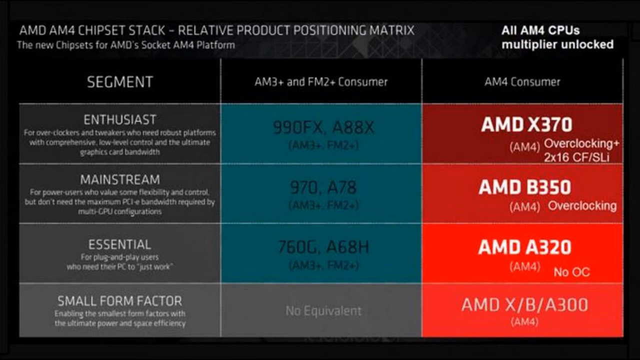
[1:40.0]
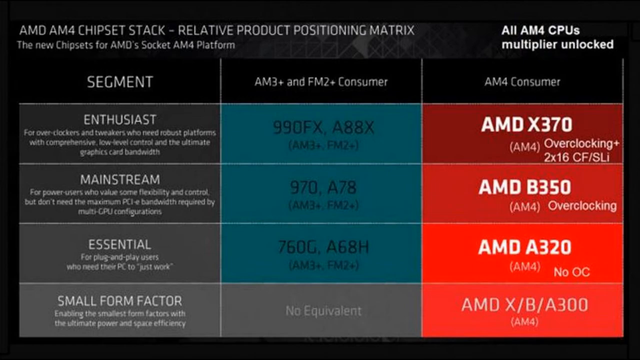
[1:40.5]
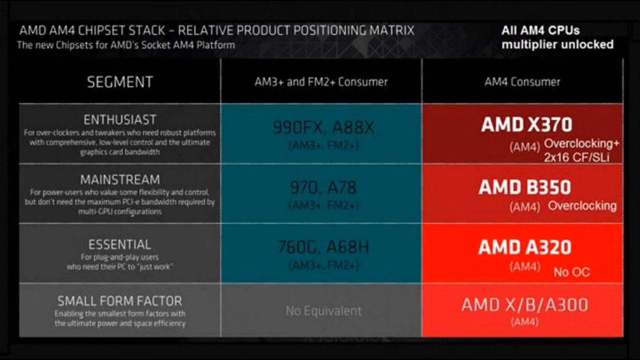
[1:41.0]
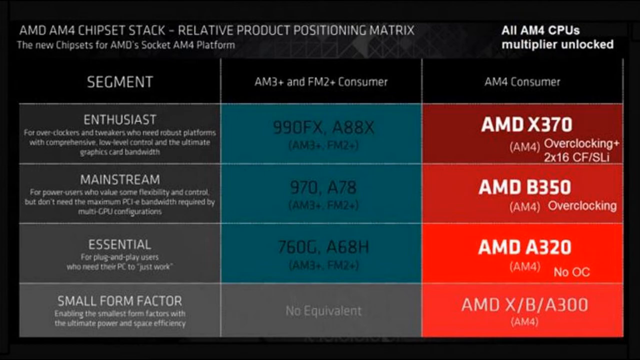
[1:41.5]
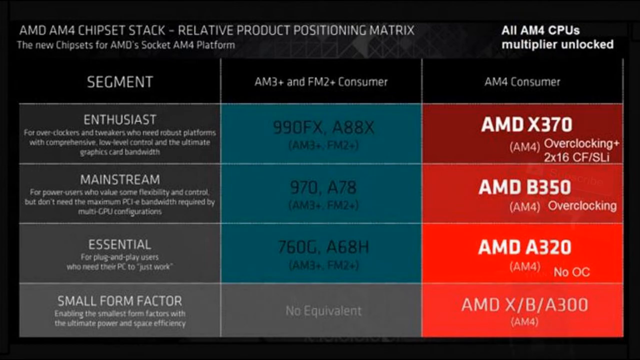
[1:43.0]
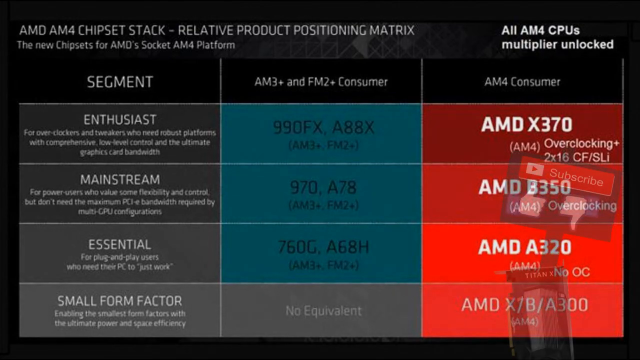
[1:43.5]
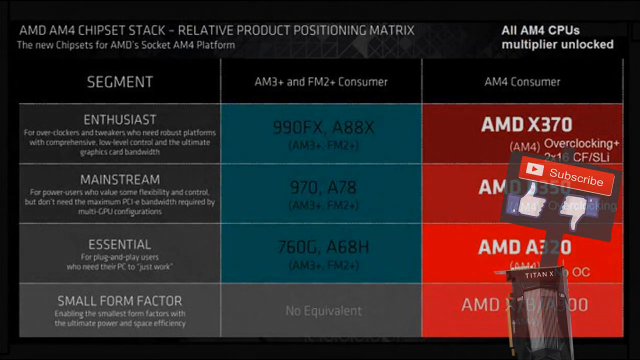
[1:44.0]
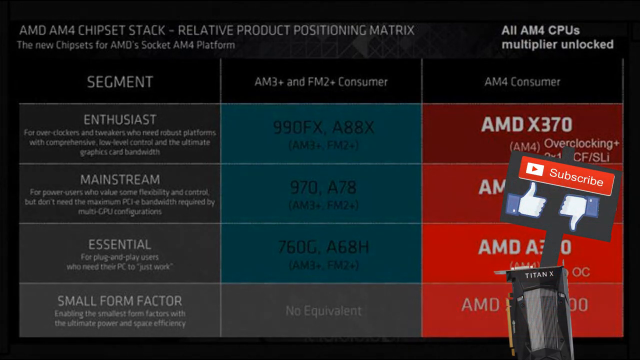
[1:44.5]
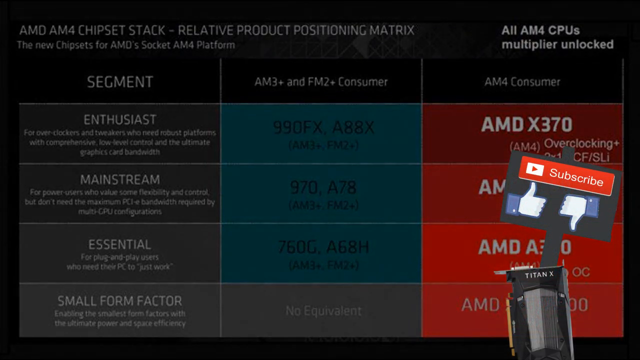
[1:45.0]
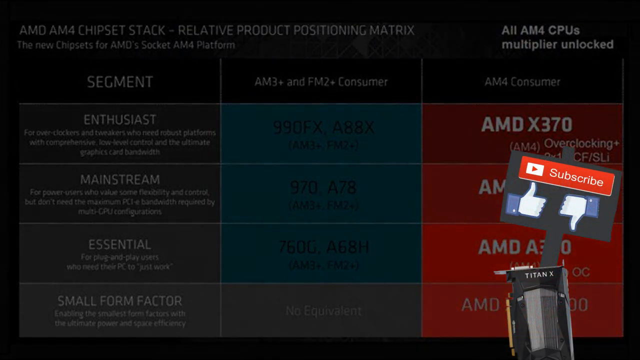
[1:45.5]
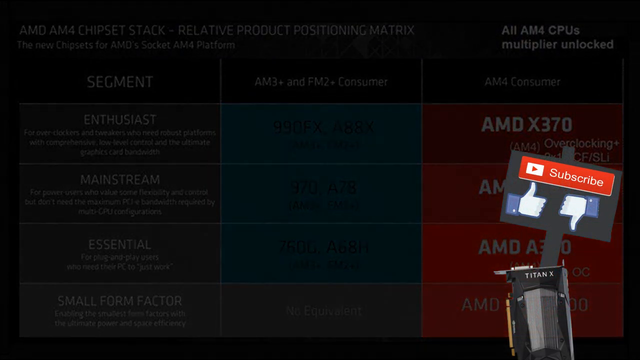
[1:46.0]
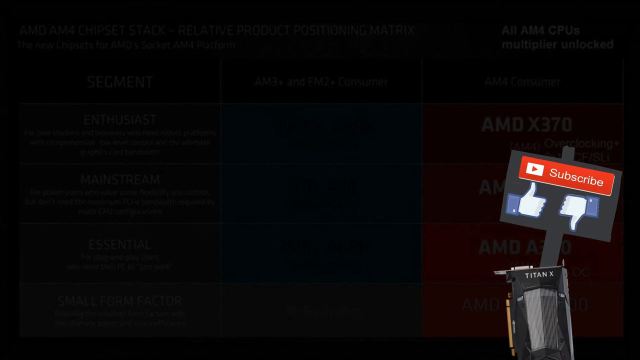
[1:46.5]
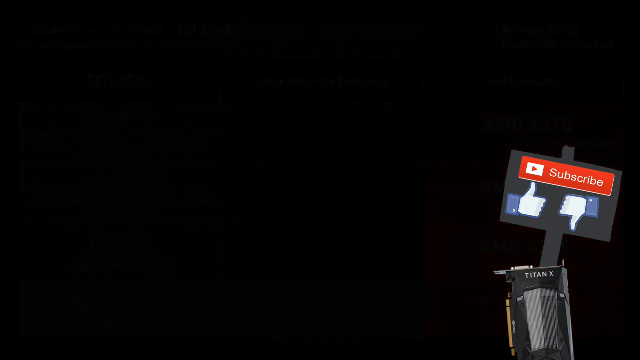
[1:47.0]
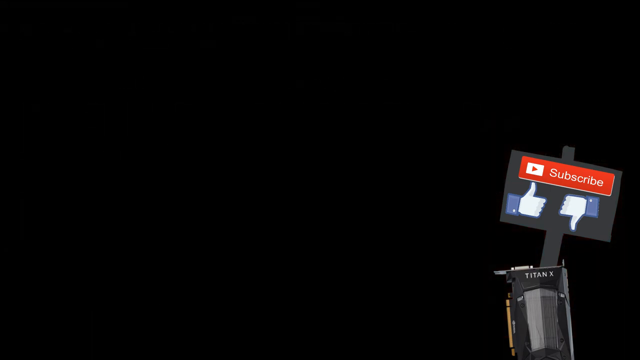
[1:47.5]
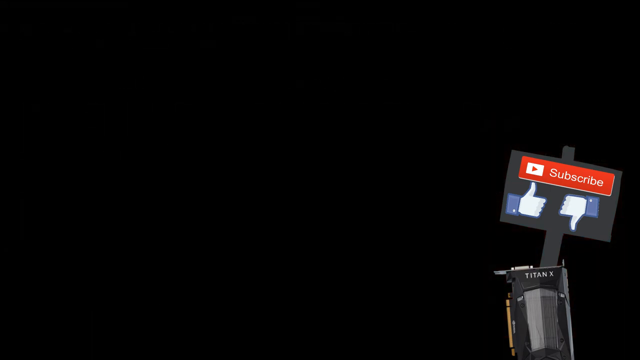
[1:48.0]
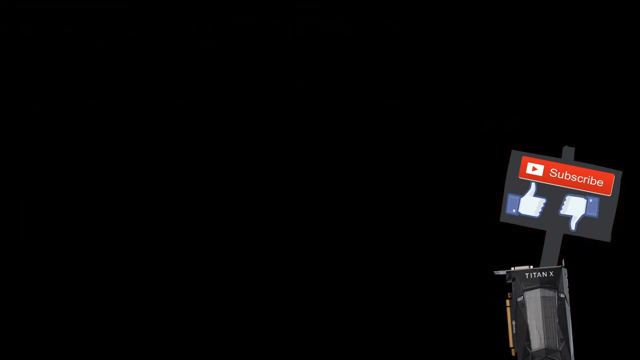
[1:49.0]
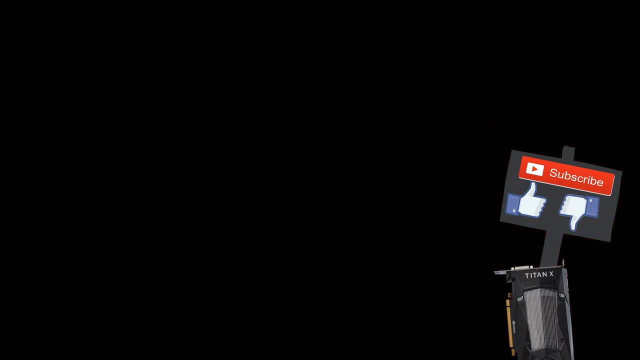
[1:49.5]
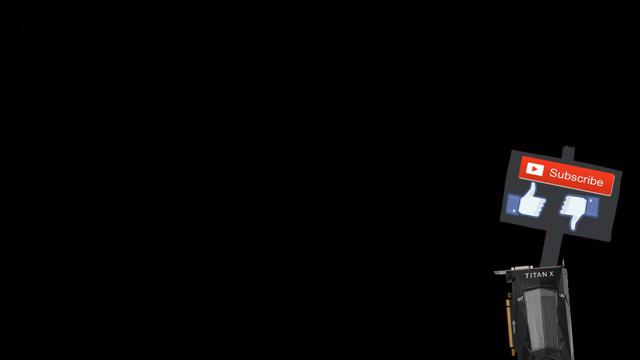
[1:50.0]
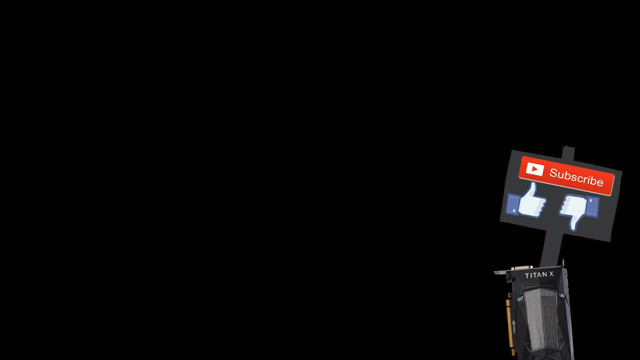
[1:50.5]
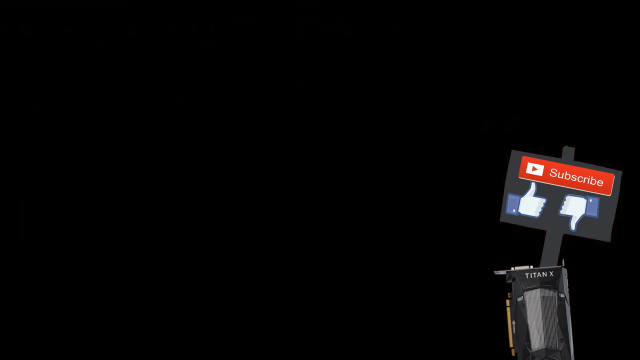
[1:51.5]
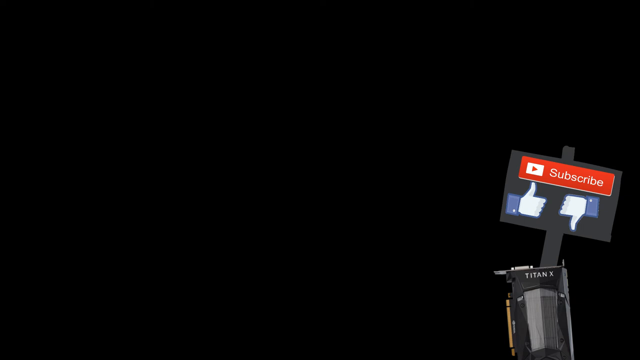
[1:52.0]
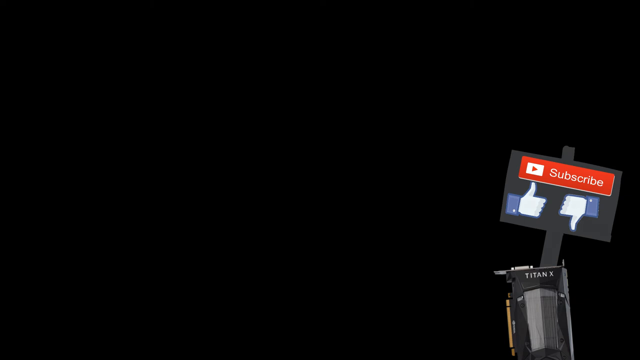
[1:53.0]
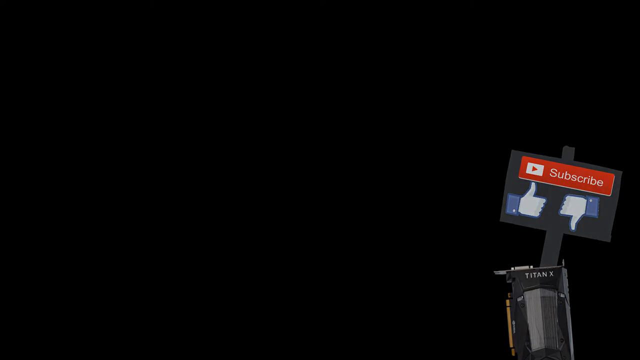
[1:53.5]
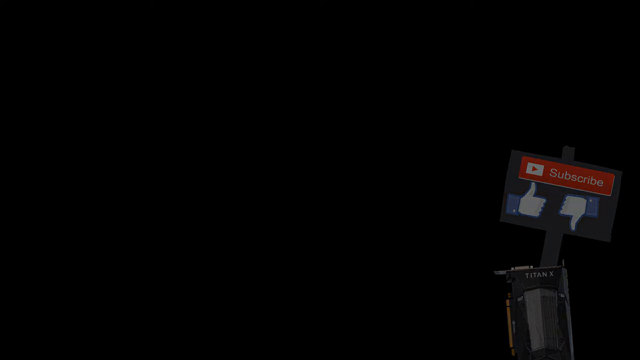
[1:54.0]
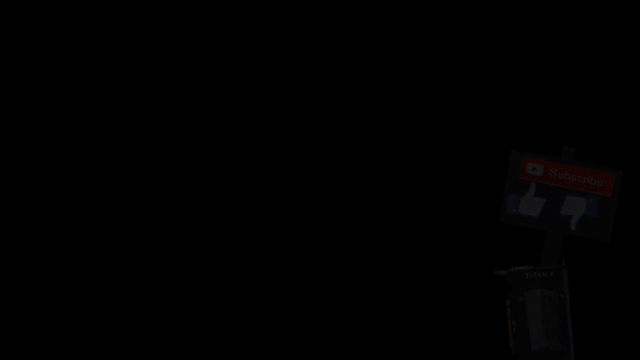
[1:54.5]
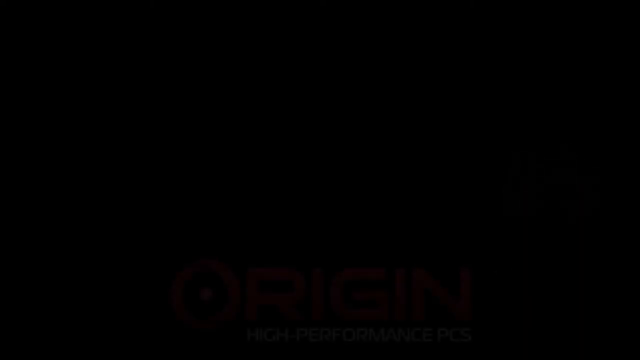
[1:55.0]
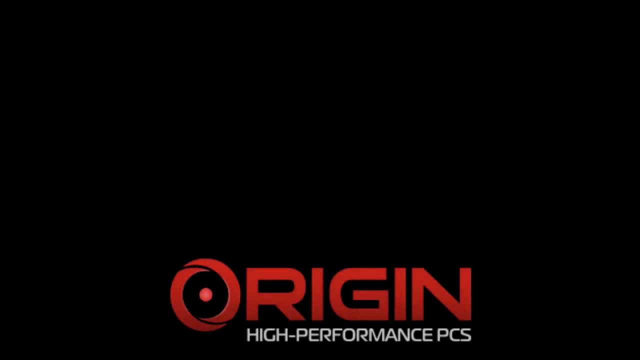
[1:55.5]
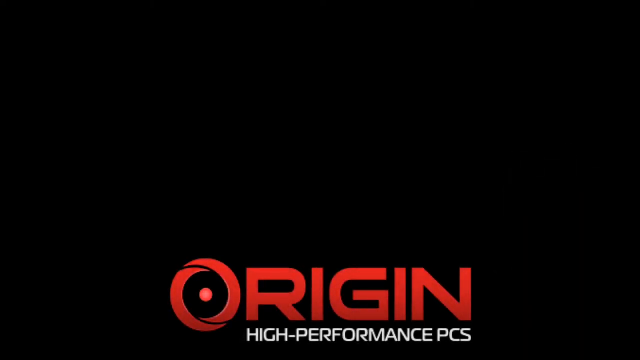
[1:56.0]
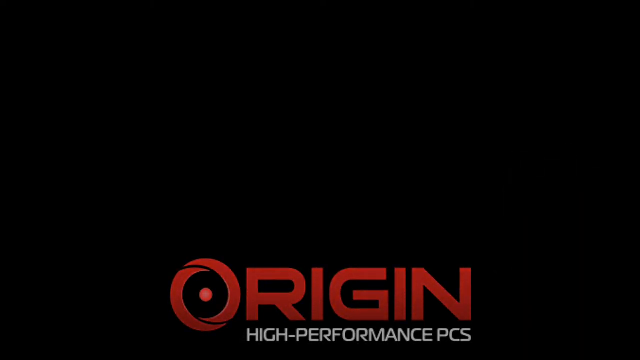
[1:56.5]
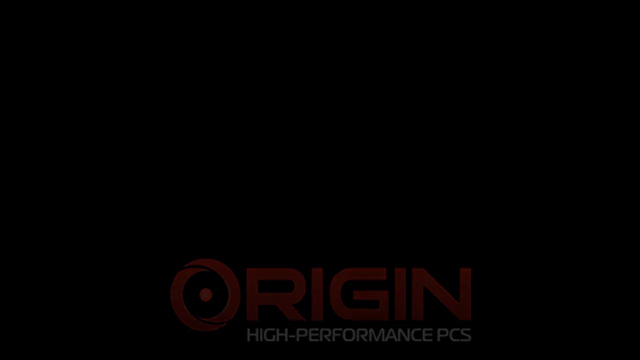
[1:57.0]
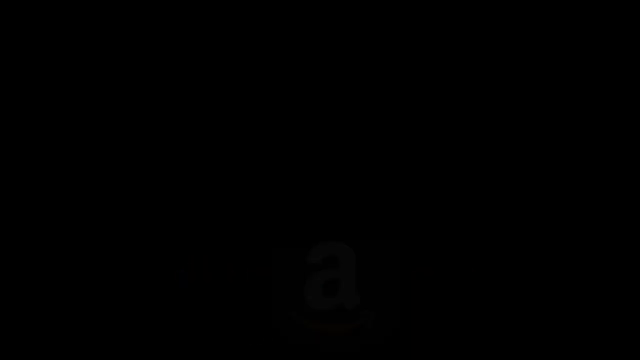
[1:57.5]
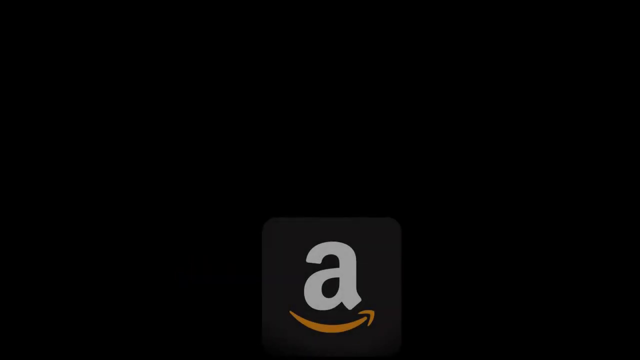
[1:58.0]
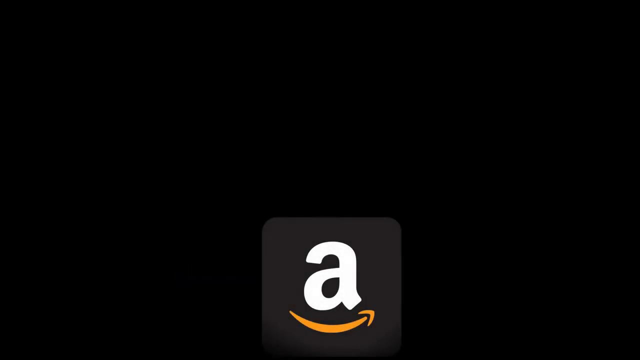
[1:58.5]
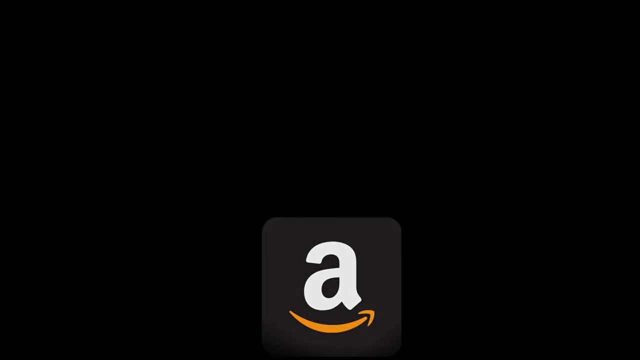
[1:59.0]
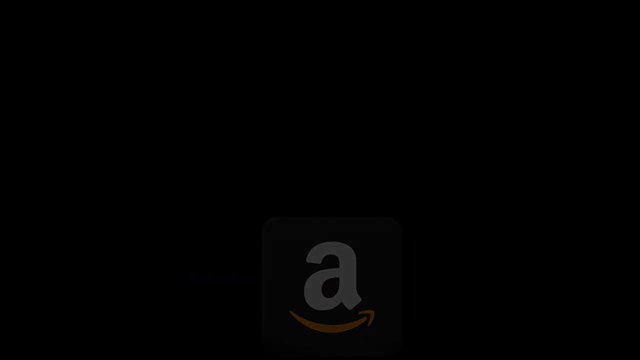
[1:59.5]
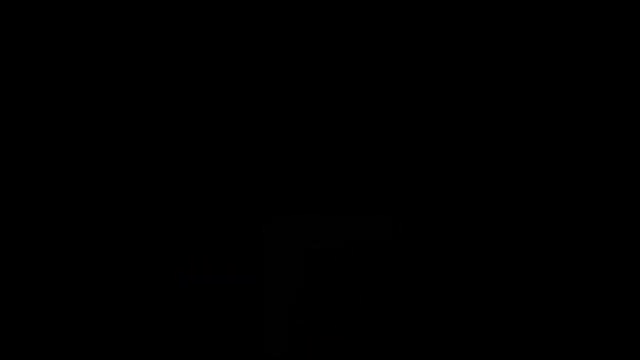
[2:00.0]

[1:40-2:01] The table comparing AM3+, FM2+, and AM4 CPUs remains on screen, noting that all AM4 CPU multipliers are unlocked. Its headers are segment, AM3+ and FM2+ consumer (the older generation), and AM4 consumer (the newest). The newest ones are highlighted in a black background and the older generation ones in a blue background. There are four segments: Enthusiast, Mainstream, Essential, and Small Form Factor. A Titan X video card then appears in the bottom right, with a thumbs up, thumbs down, and subscribe image right over it. It suddenly disappears and a new screen appears with the word "origin" in red text, "high performance" below it, and an Amazon logo at the bottom. The video then goes to a black screen.